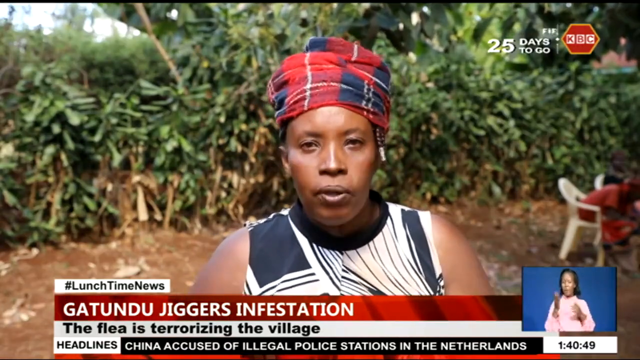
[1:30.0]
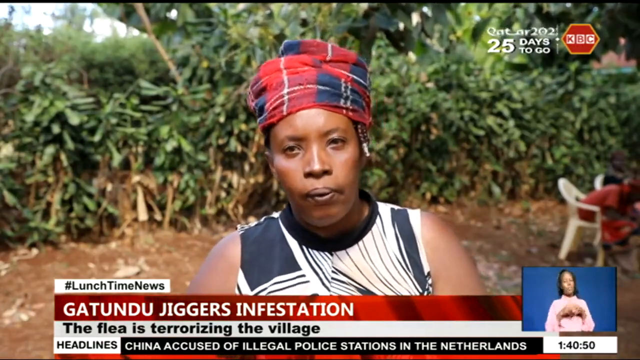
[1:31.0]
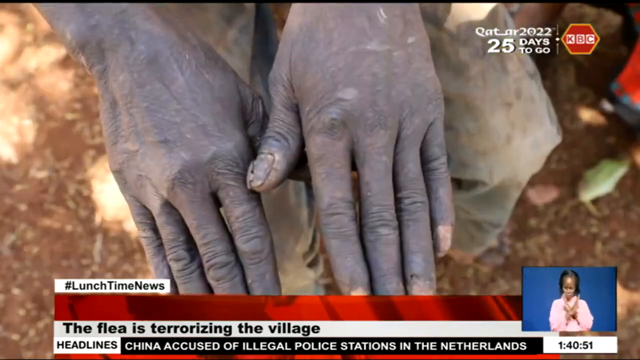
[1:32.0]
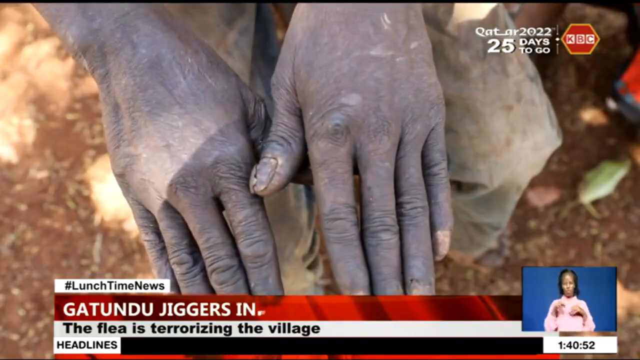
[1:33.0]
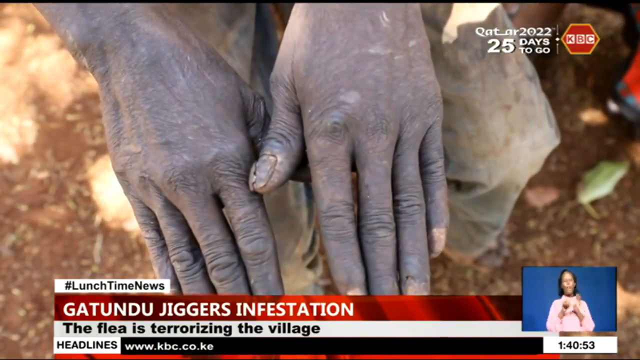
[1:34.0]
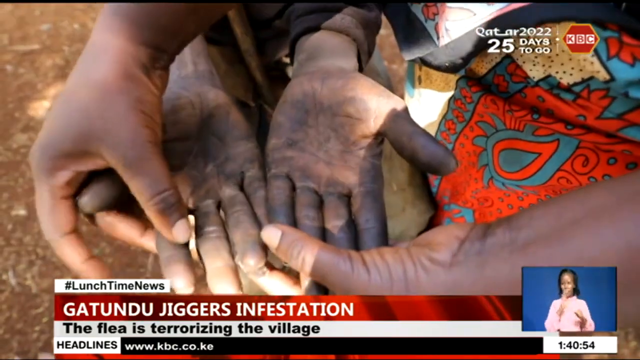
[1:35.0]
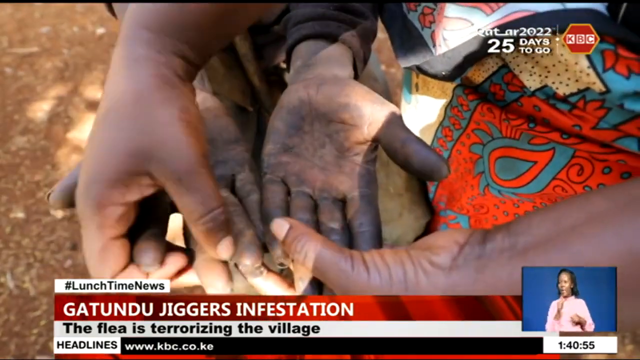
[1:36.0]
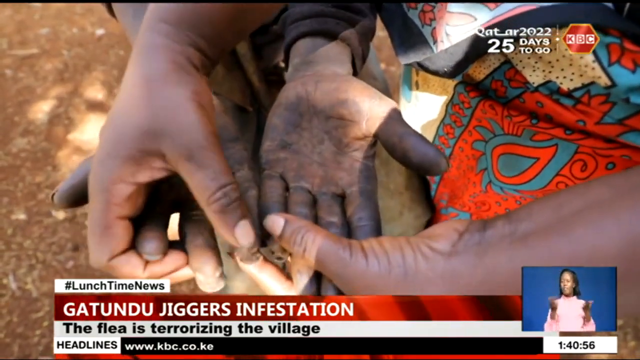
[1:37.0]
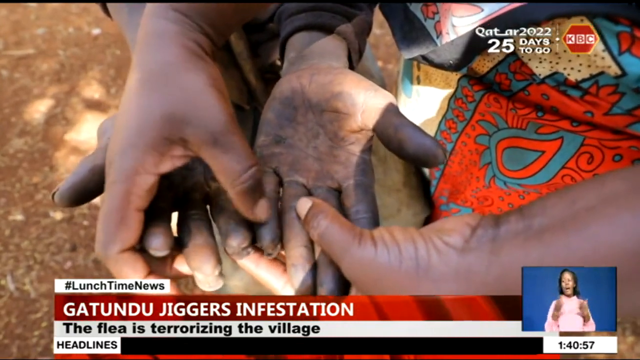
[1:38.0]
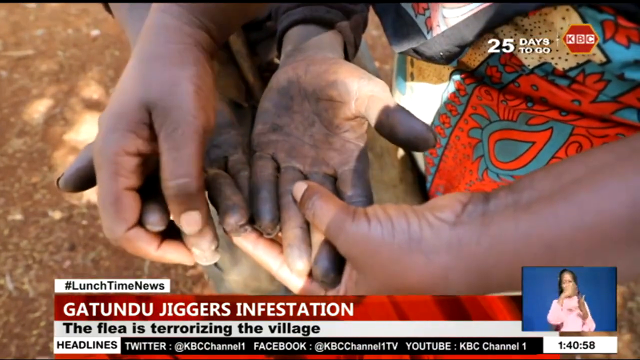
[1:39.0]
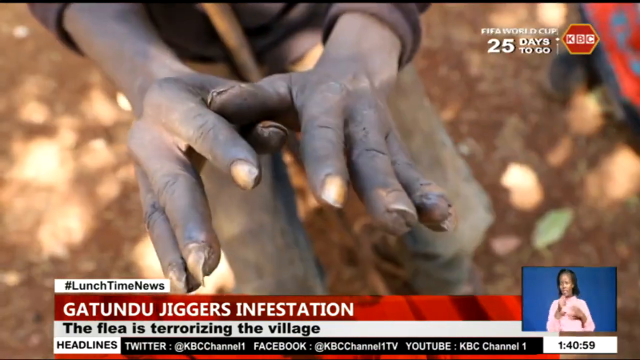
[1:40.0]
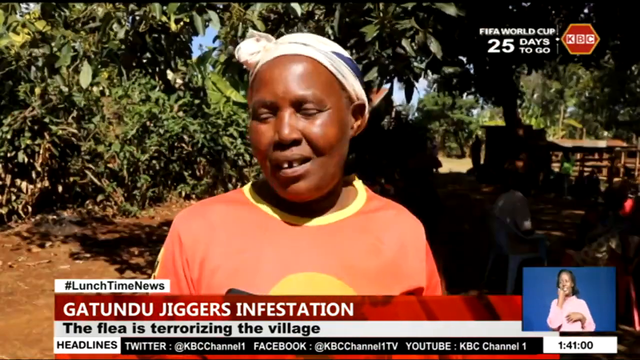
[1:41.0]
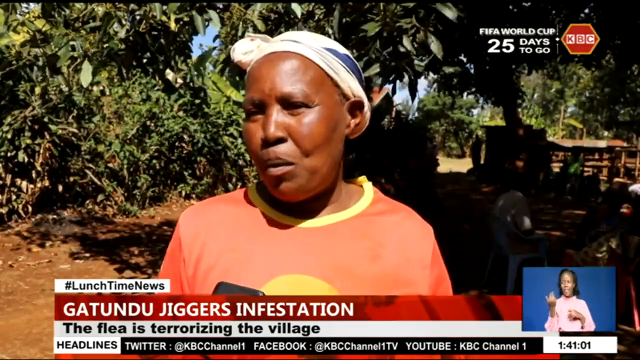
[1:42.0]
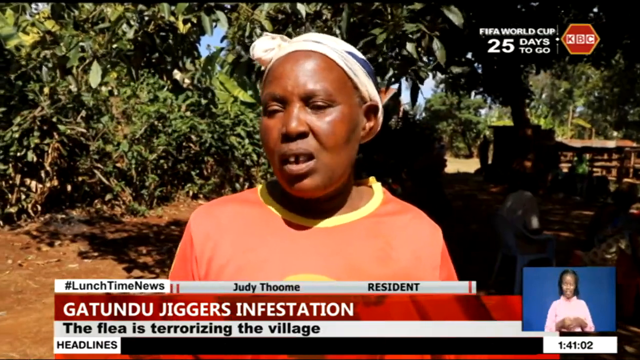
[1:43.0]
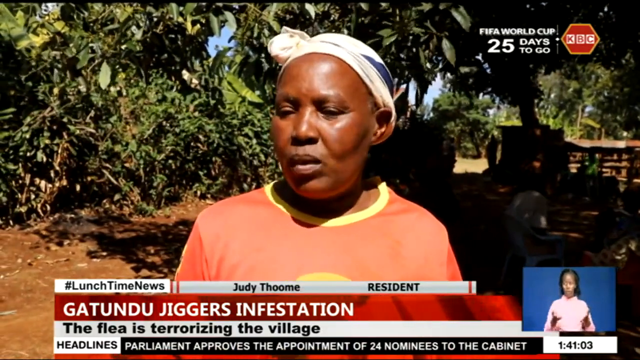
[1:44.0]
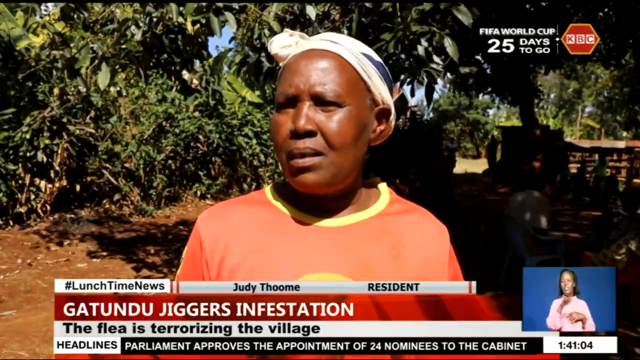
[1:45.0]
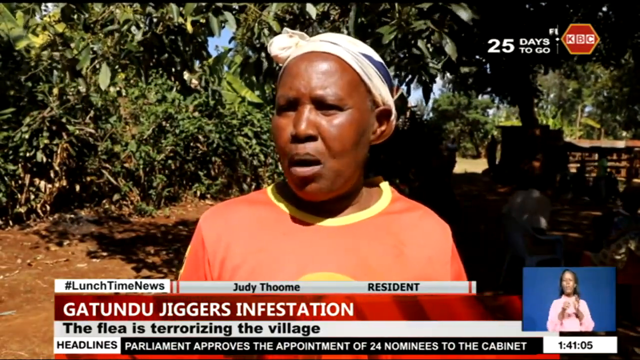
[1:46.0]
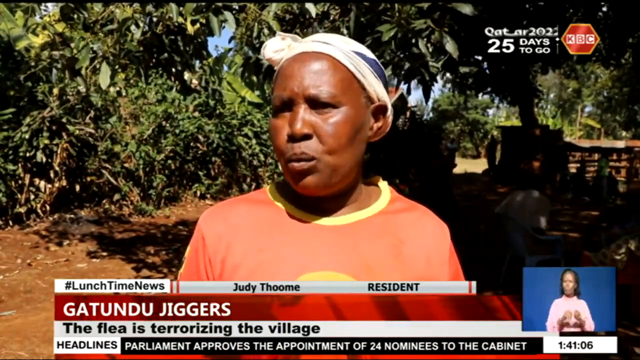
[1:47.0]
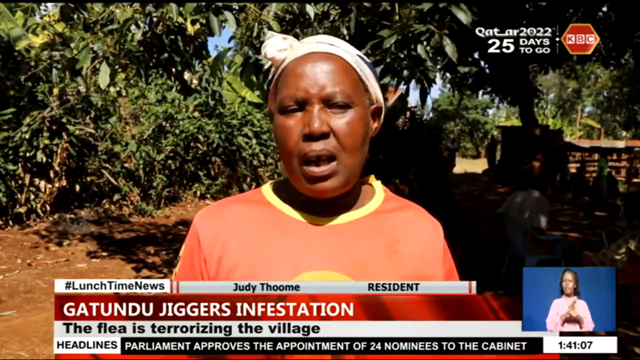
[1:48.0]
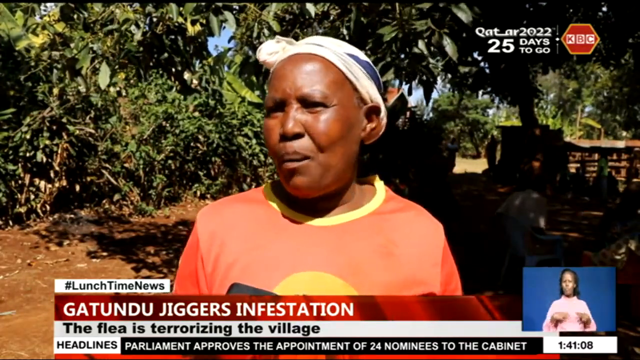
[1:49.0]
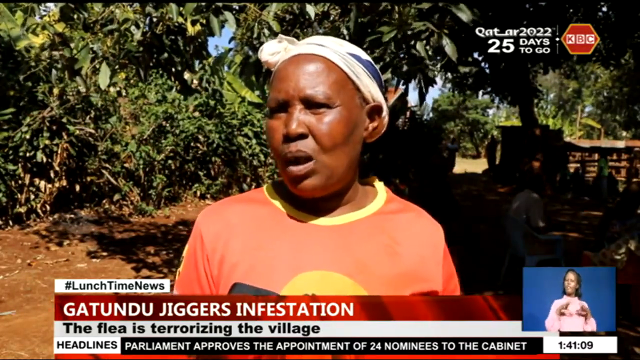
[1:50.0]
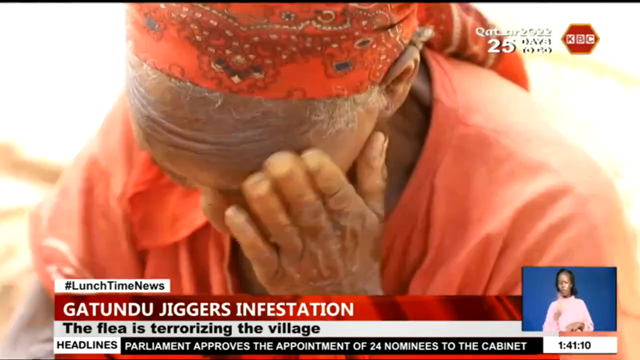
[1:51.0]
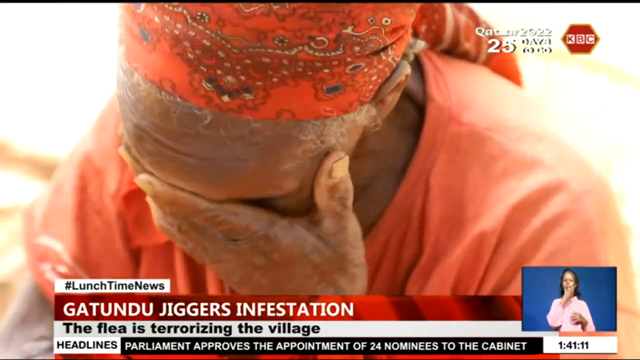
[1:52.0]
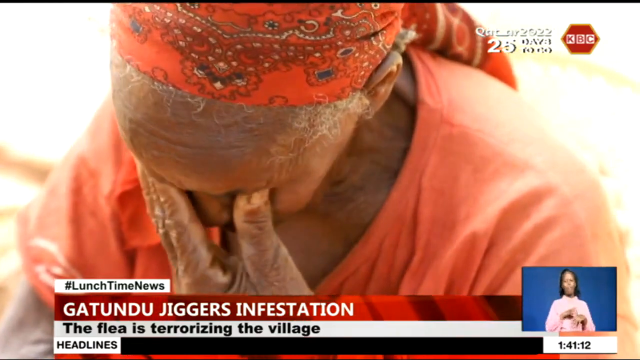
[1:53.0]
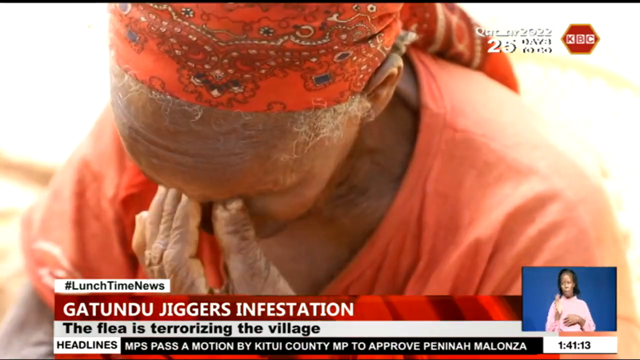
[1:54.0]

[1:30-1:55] A black, brown-skinned woman stands in front of green bushes on a dirt pavement, wearing a red, blue and white head tie and a black and white sleeveless top. She is looking straight ahead. In the bottom right is a black, brown-skinned woman, a sign language interpreter. On the right, people are sitting in white lawn chairs; one person can be seen clearly. At the top is written "FIFA," "25 Days to Go," "KBC" and "Assemble." At the bottom is "#Lunchtime News, Katandu Jiggers Infestation. The flea is terrorizing the village." The scene then goes to brown hands. The hands turn palm up, and a person holds the fingers of the hand on the left; there are four hands. Next is a shot of brown hands with puffy fingers and jagged fingernails, palm side down. The person appears to be sitting and holding a cane, and is wearing dirty jeans and a brown sweater. The scene then changes to a black, brown-skinned woman with a white and blue headscarf and an orange and yellow top. At the bottom is "Judy Thorne, Thome resident." She is speaking. The next shot shows a woman with her head down.